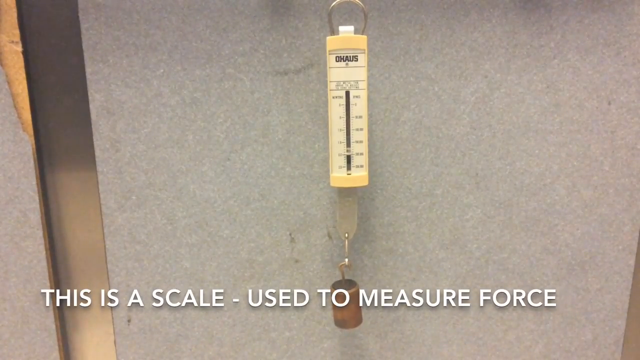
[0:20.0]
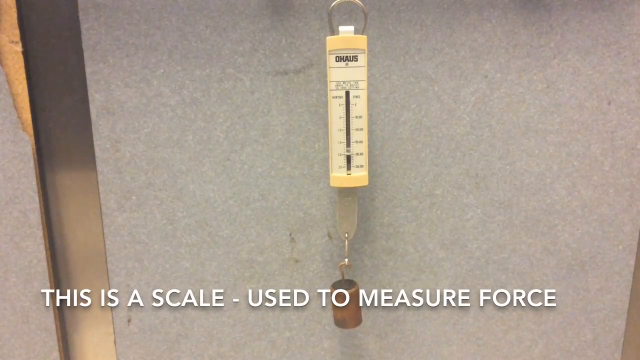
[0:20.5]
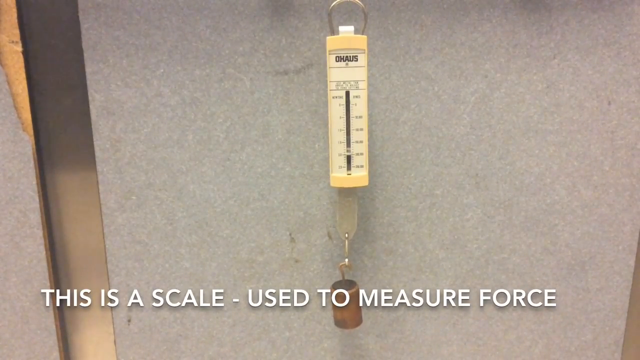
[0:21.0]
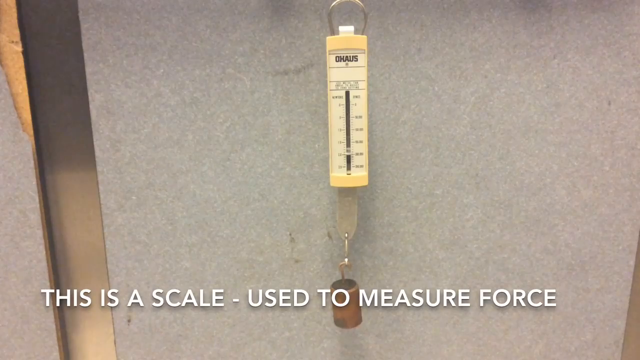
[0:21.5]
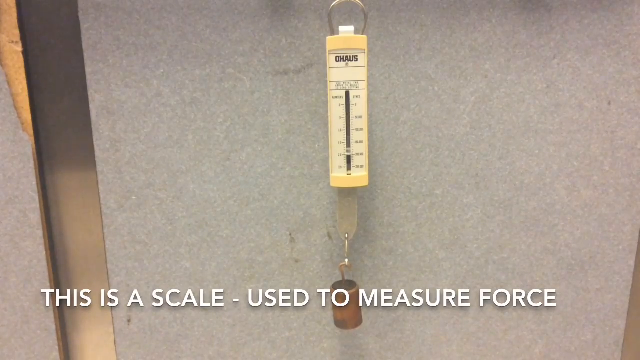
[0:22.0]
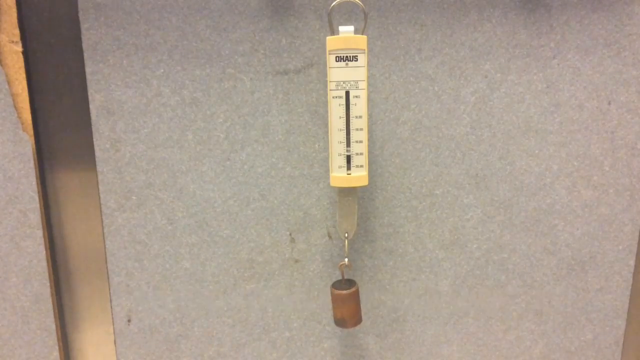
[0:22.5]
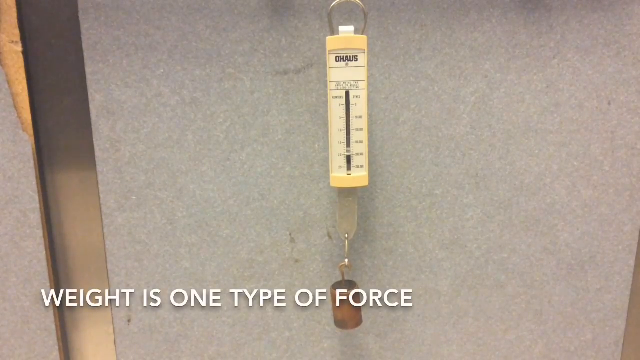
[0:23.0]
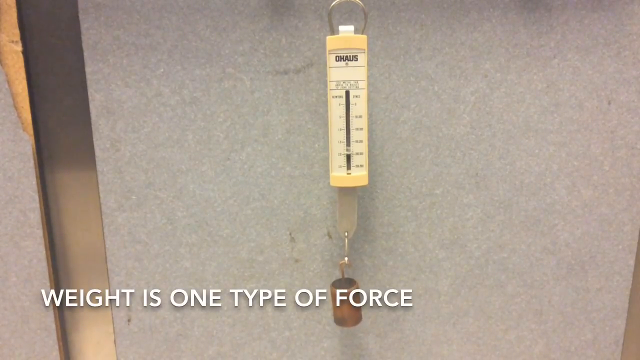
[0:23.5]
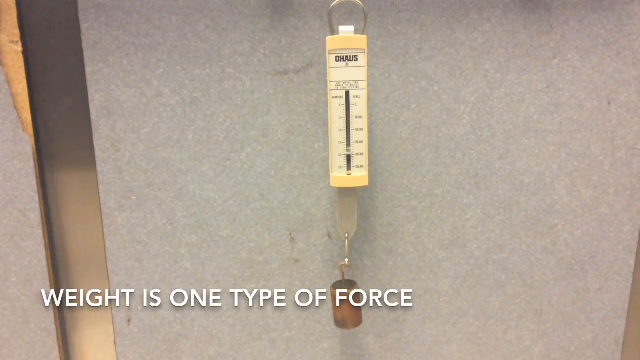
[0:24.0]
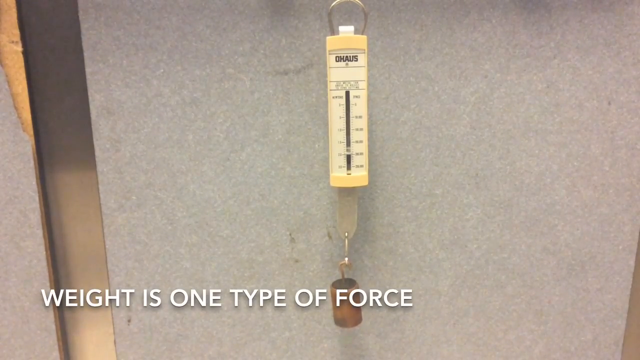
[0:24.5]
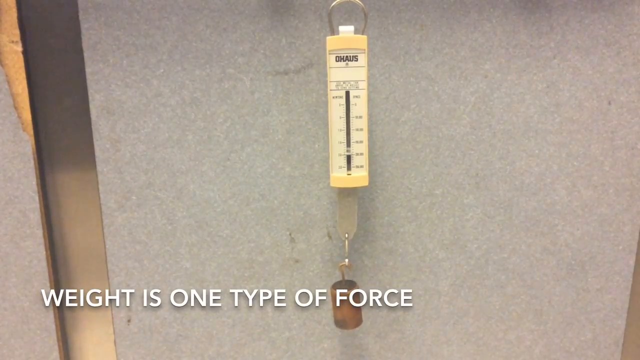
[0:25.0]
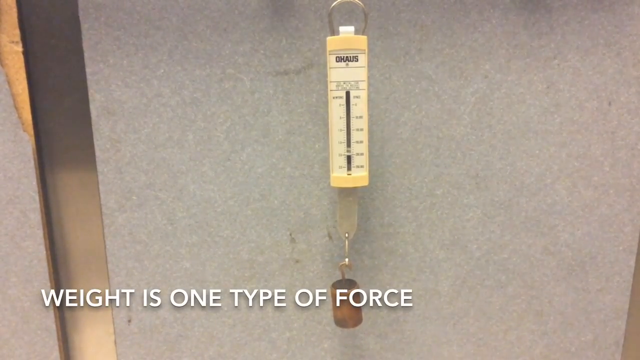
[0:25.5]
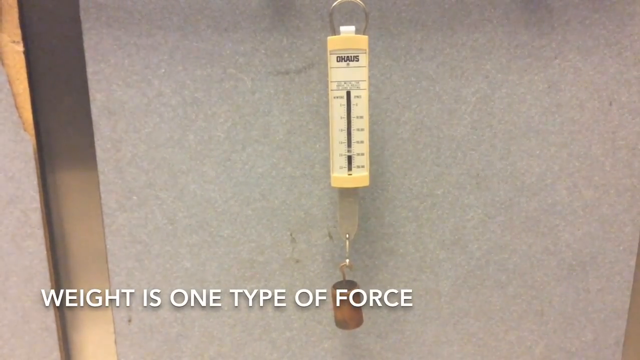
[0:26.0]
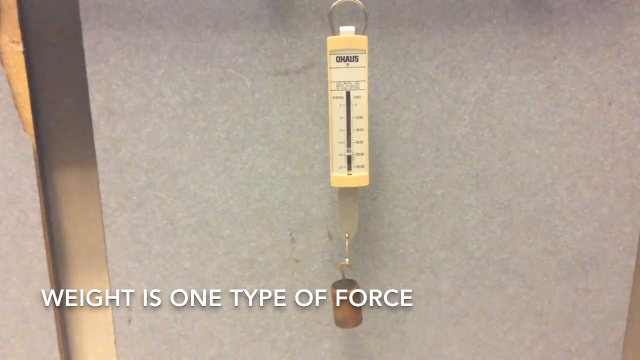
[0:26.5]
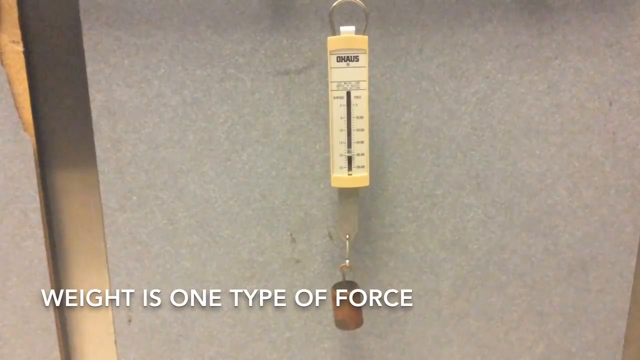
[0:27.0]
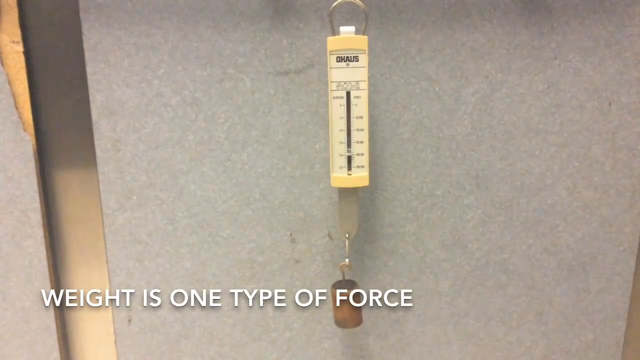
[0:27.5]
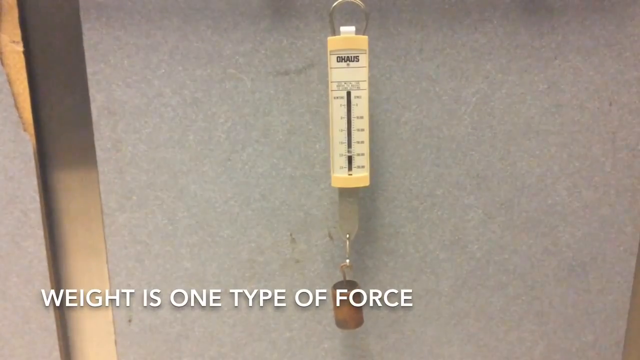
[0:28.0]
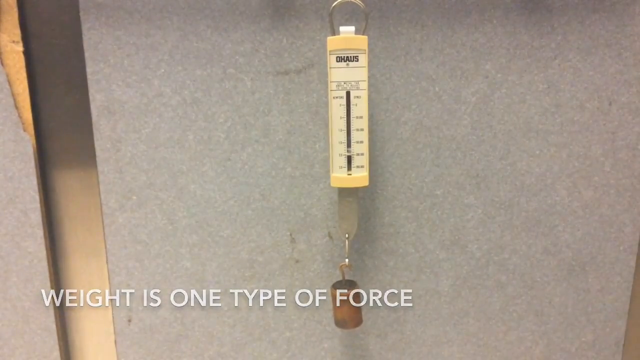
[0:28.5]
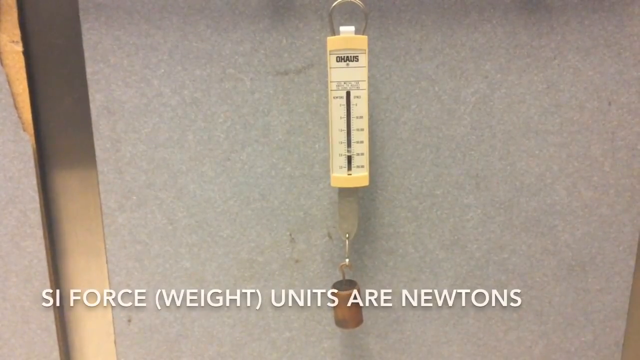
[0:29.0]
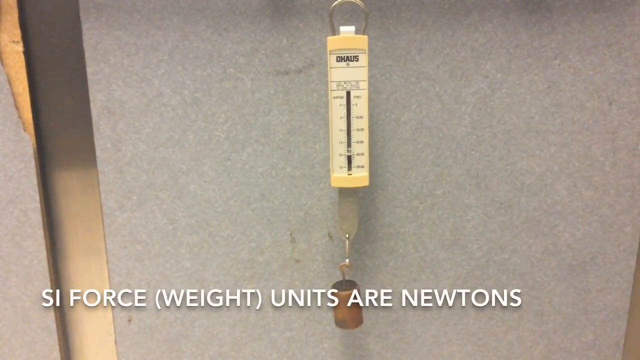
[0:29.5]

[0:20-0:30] A scale hangs in front of a white and black speckled wall that sort of looks like granite, suspended from a silver loop at the top center of the screen. The borders of the scale are yellow and its face is white, with numbers on each side of a line that goes up the middle. A silver tongue hangs down with a brown thing attached to it. White letters at the bottom of the screen read "this is the scale - used to measure force." The scale gently rocks toward the camera and back away from it. Then the text reads "weight is one type of force." The scale pulls down and goes up. Further white text appears mentioning units and newtons.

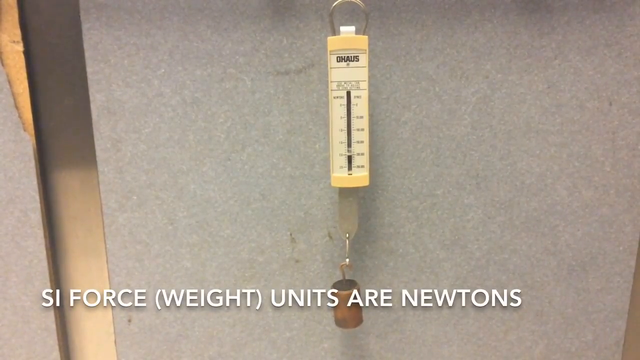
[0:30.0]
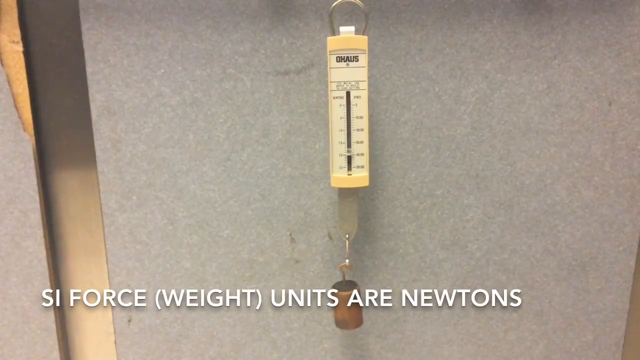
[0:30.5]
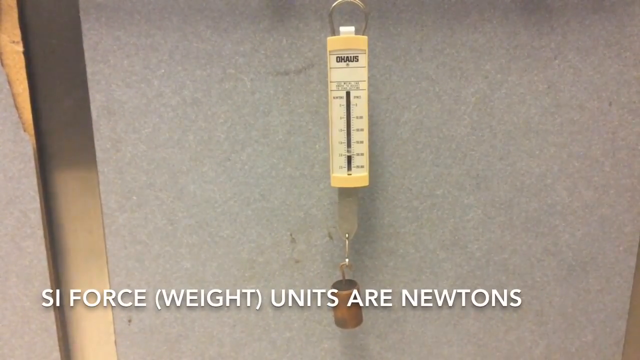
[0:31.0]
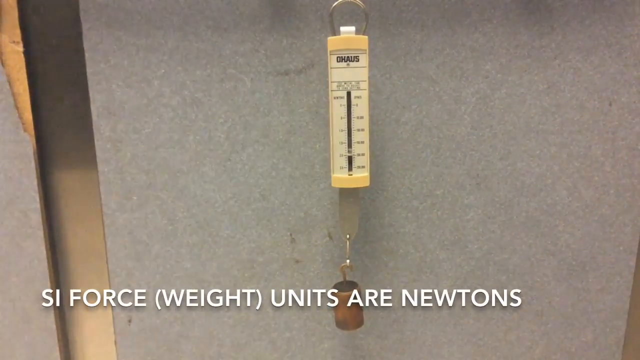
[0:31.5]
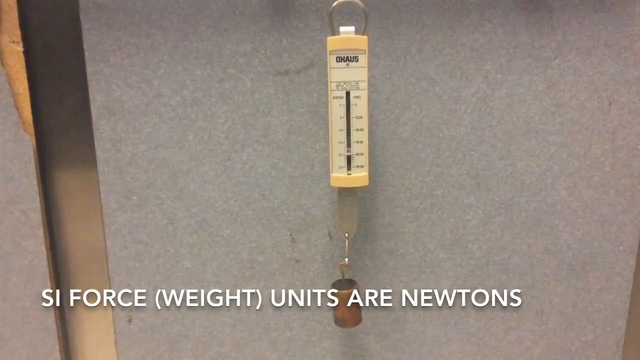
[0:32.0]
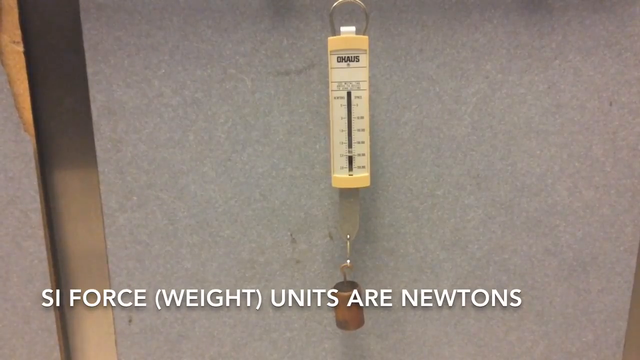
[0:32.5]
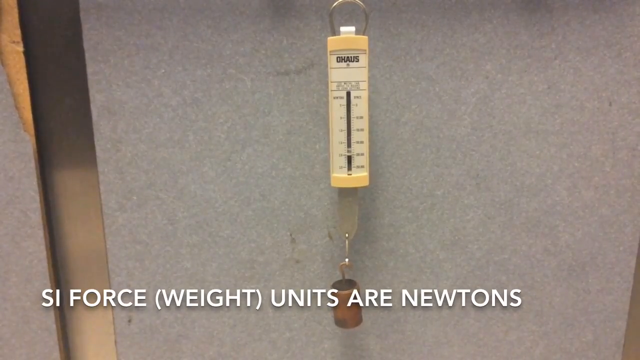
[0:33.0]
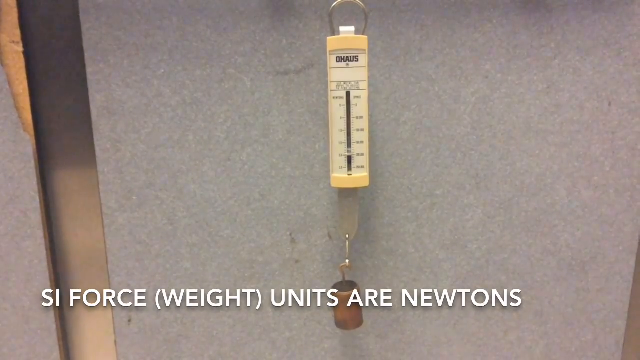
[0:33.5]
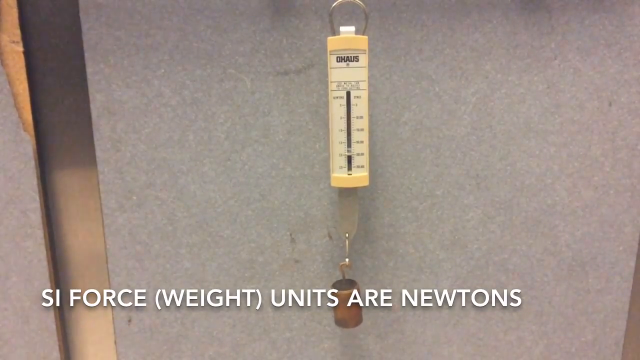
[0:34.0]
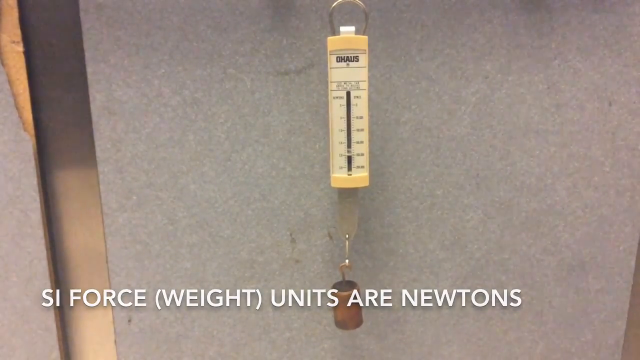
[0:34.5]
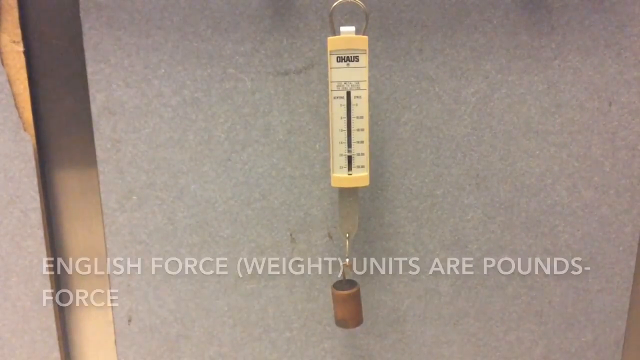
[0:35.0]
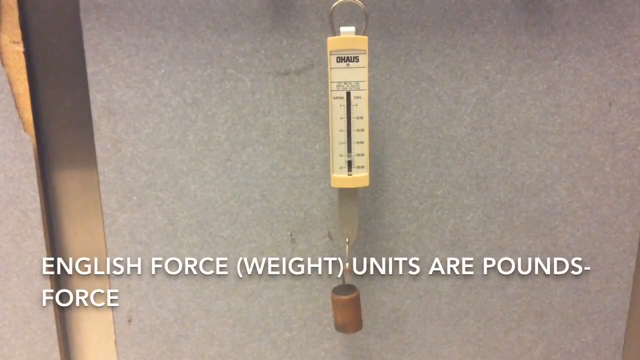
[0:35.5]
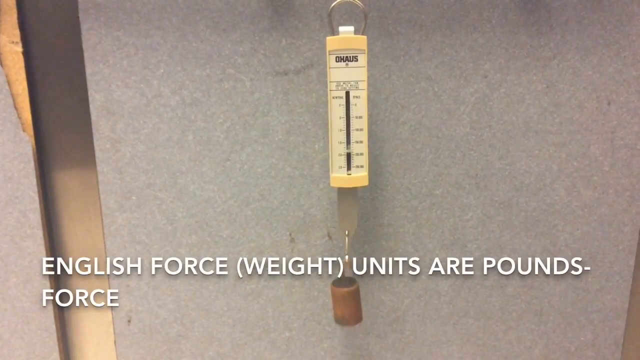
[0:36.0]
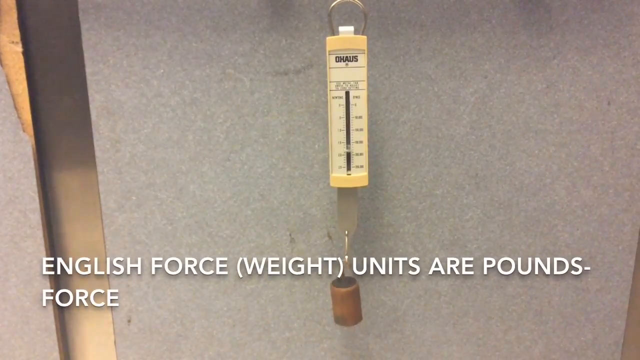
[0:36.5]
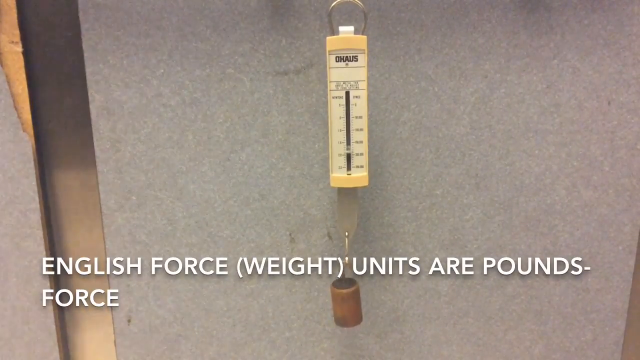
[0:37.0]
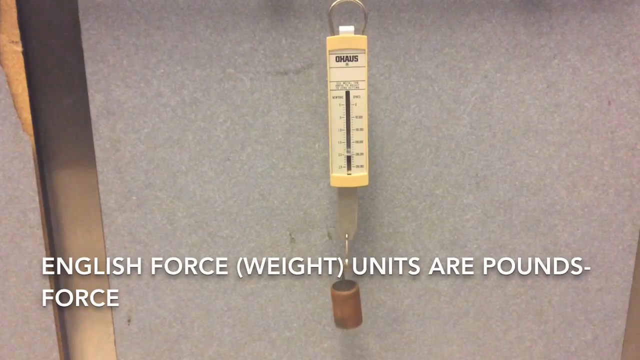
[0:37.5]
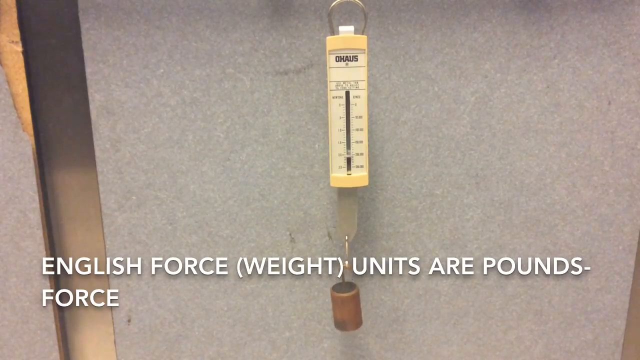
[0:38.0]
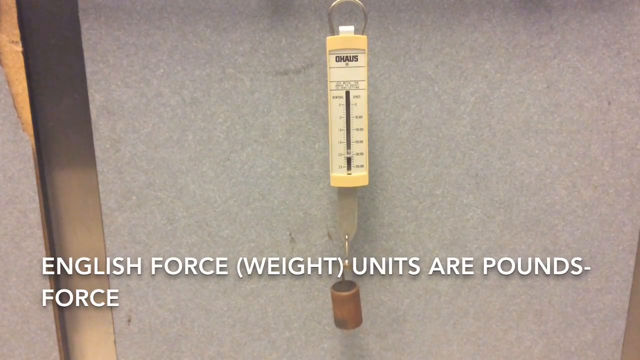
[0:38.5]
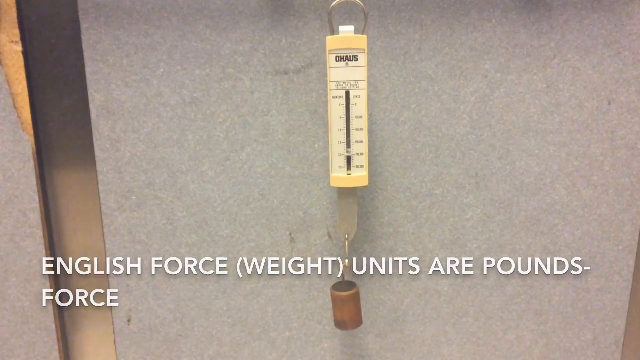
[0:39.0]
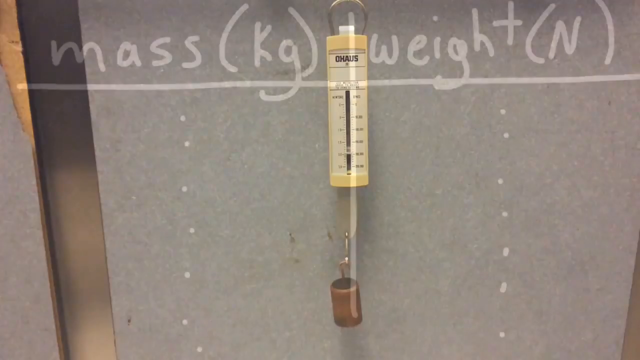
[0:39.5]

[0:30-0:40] A scale hangs from a white wall that looks like granite, suspended from a silver loop. Its borders are yellow and its face is white. A silver tongue hangs from the bottom with something that looks like a wooden cork at the bottom. White letters at the bottom of the screen read "SI force (weight) units are newtons." The scale gently rocks back and forth. Then the text reads "English force (weight) units are pounds force," and the thing on the scale pulls up and down.